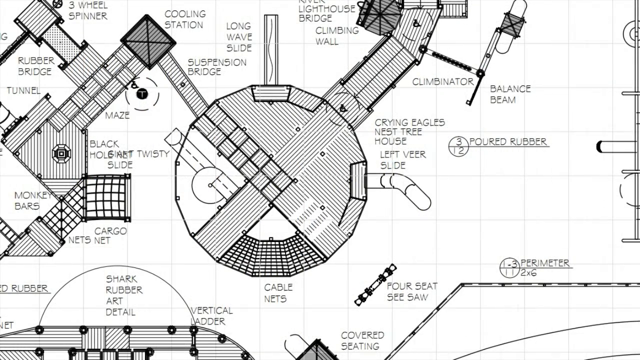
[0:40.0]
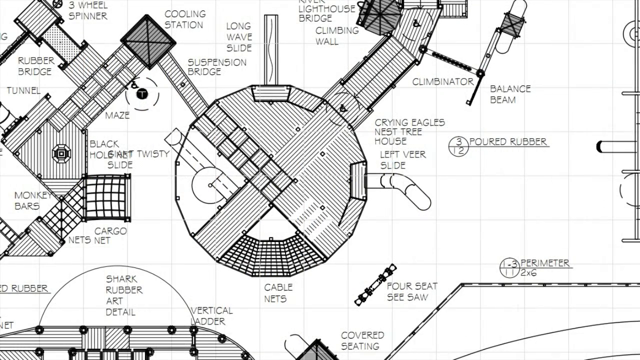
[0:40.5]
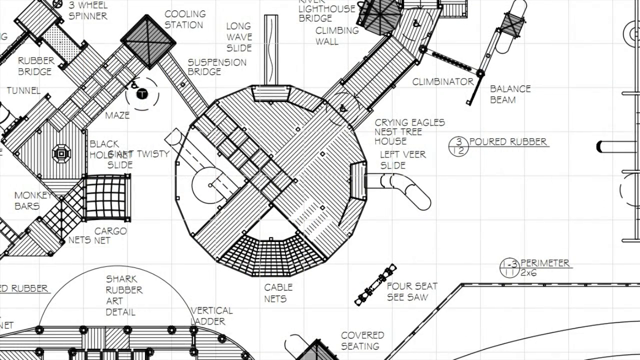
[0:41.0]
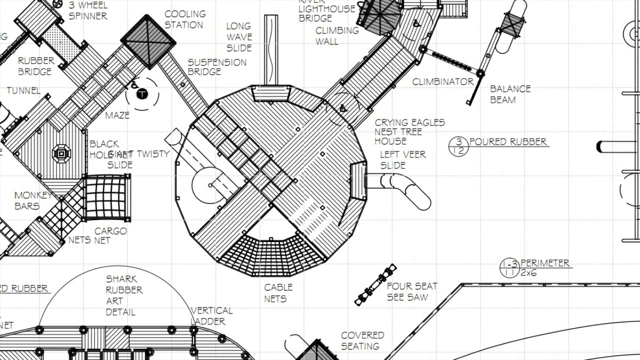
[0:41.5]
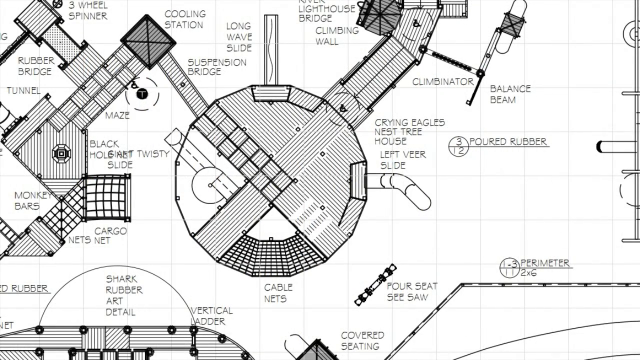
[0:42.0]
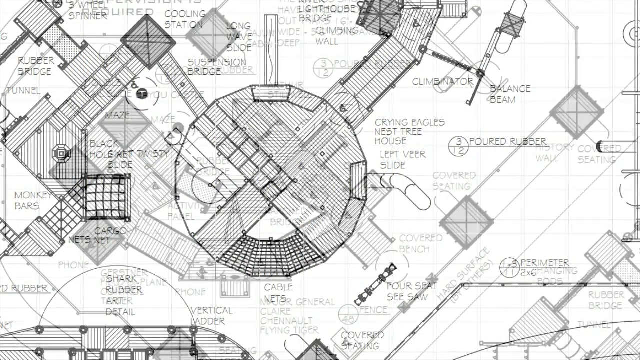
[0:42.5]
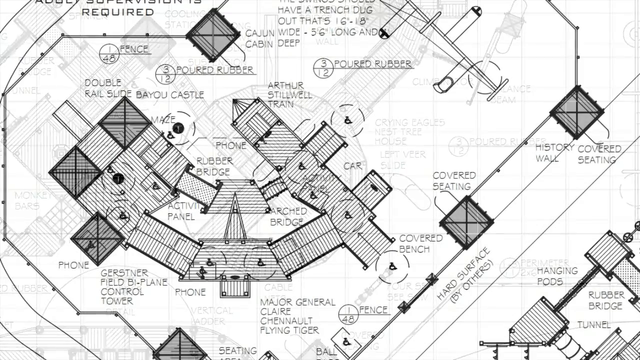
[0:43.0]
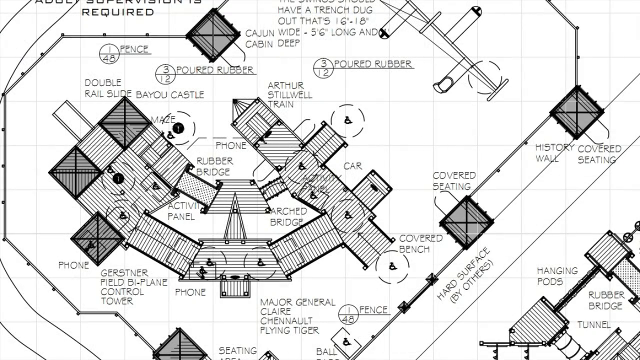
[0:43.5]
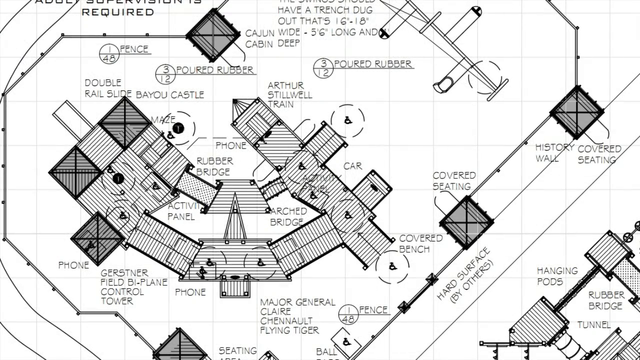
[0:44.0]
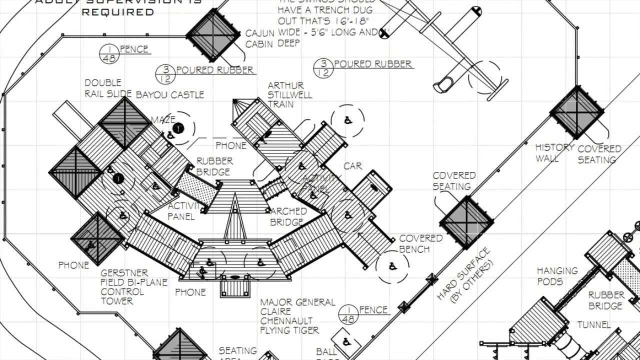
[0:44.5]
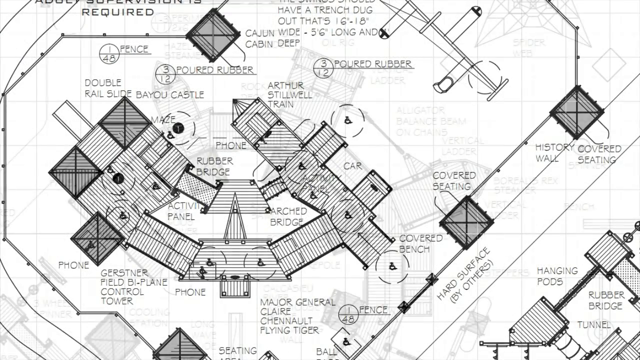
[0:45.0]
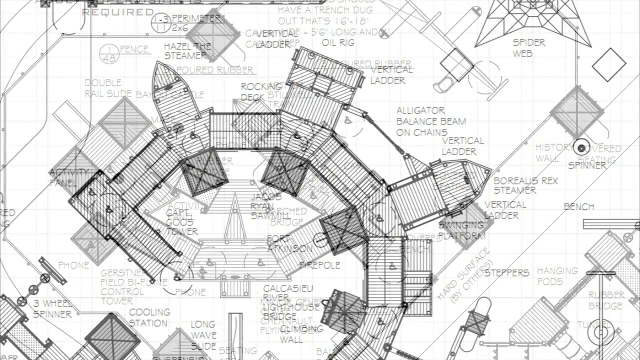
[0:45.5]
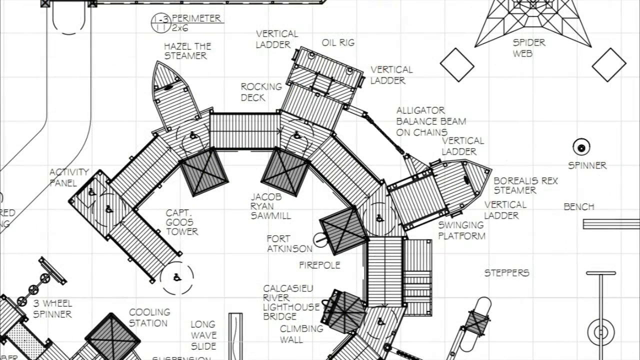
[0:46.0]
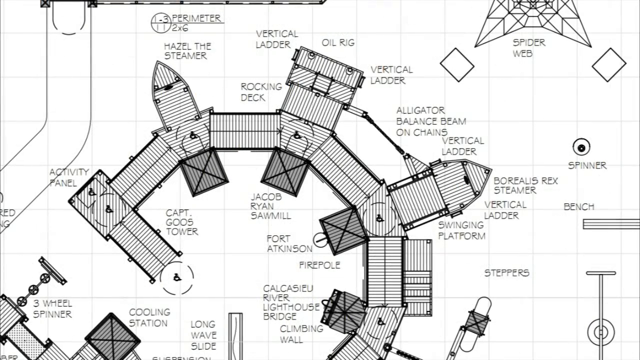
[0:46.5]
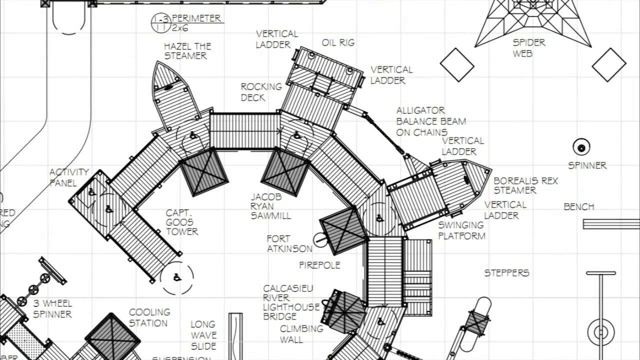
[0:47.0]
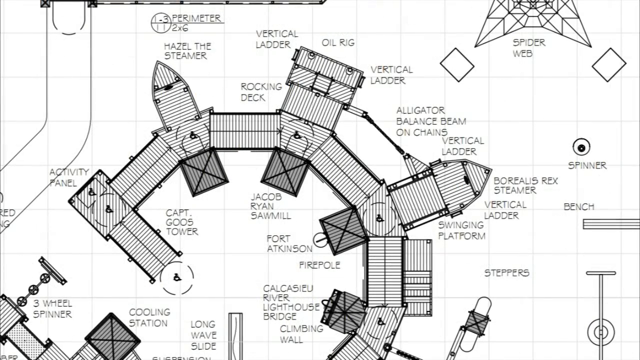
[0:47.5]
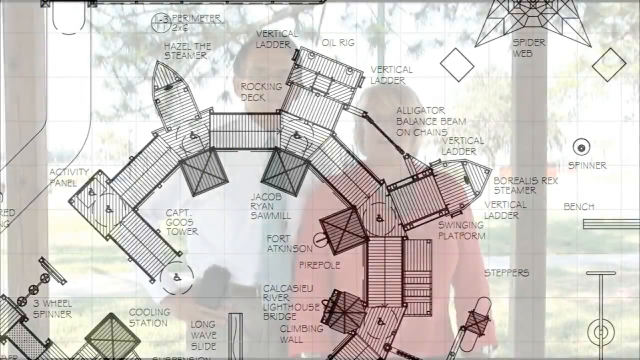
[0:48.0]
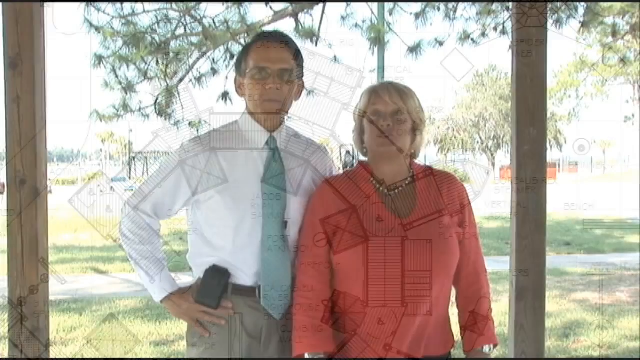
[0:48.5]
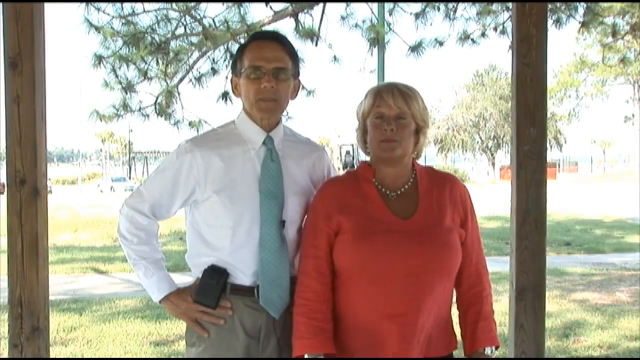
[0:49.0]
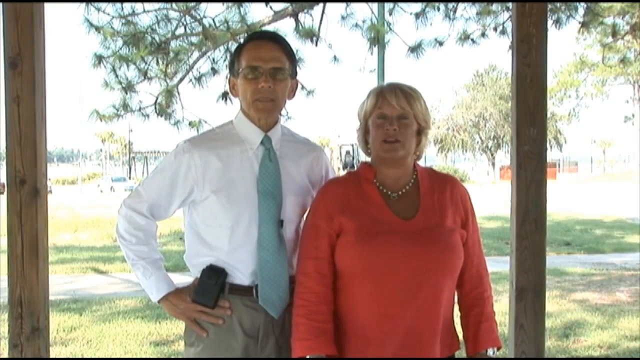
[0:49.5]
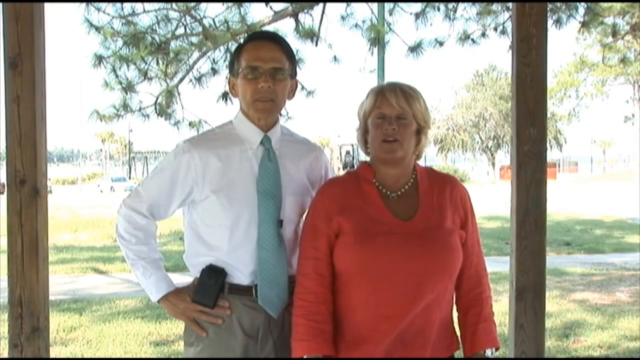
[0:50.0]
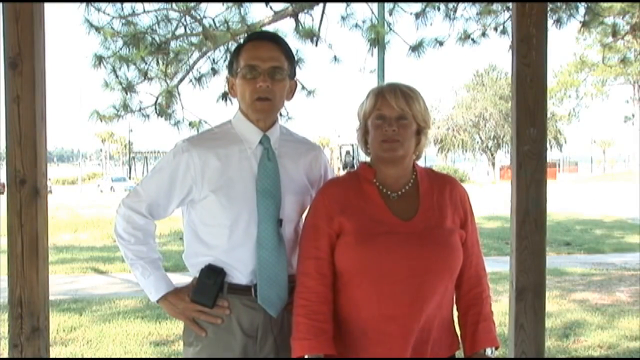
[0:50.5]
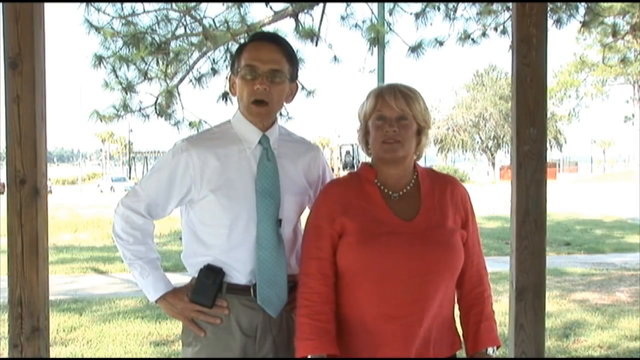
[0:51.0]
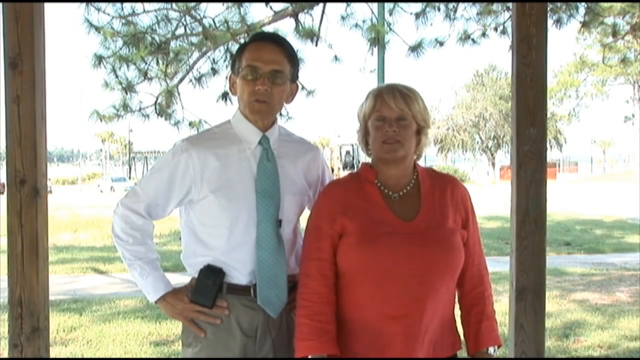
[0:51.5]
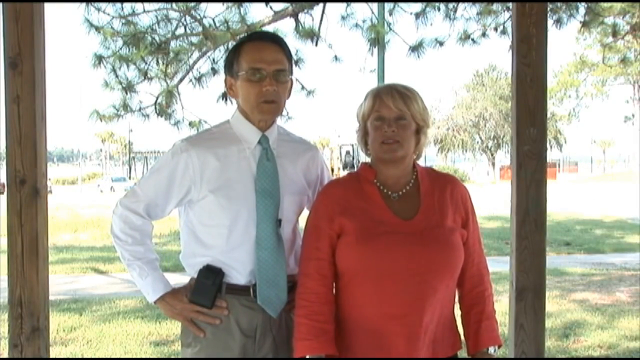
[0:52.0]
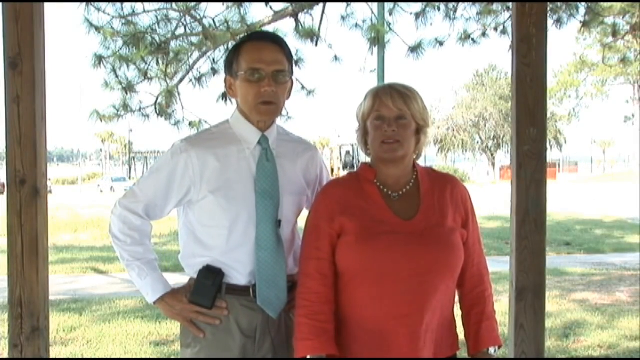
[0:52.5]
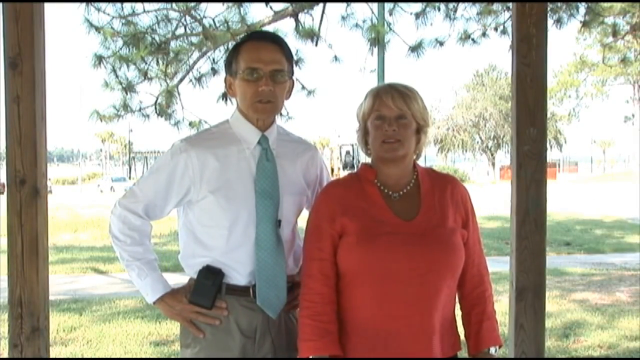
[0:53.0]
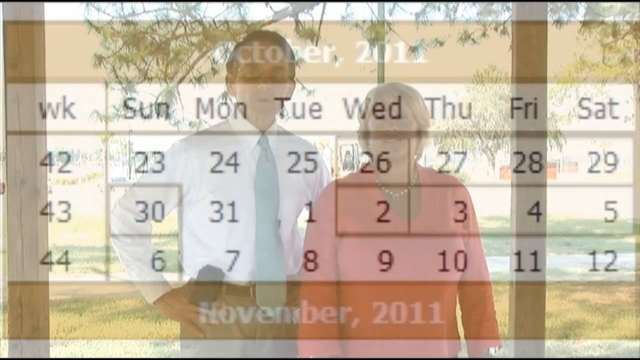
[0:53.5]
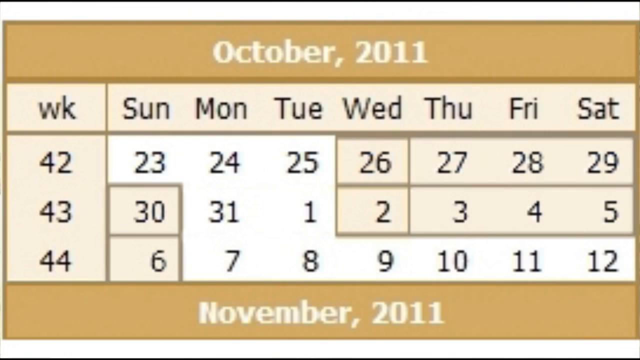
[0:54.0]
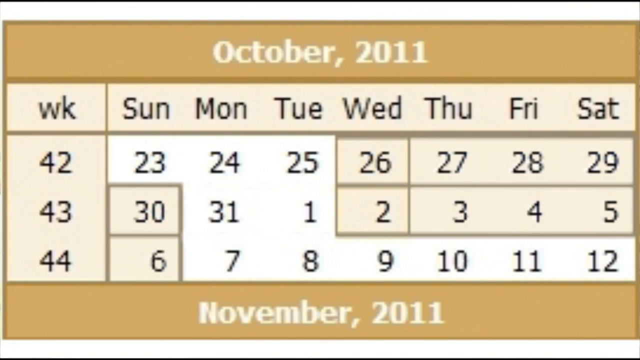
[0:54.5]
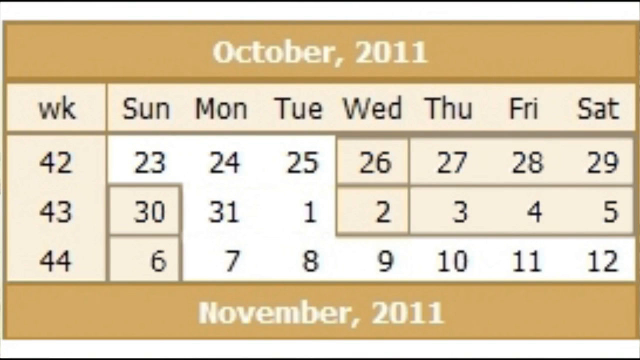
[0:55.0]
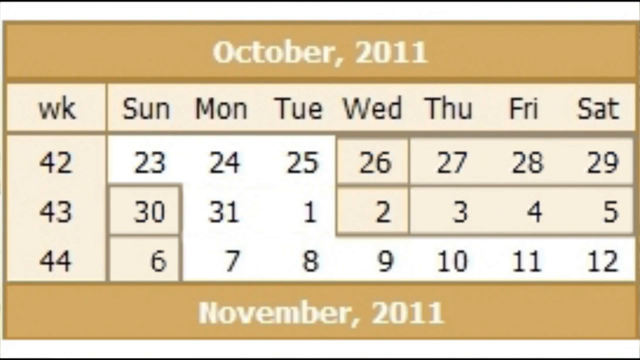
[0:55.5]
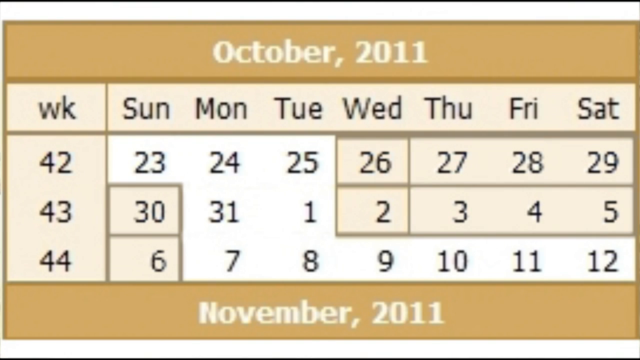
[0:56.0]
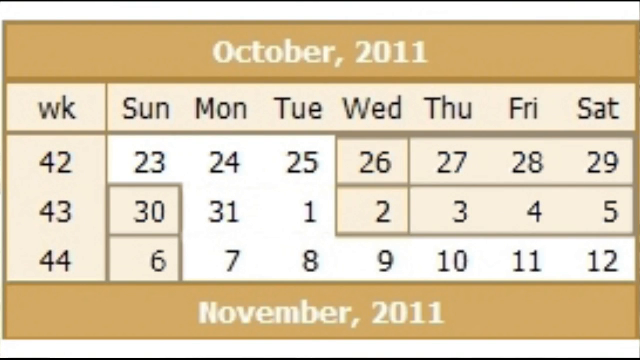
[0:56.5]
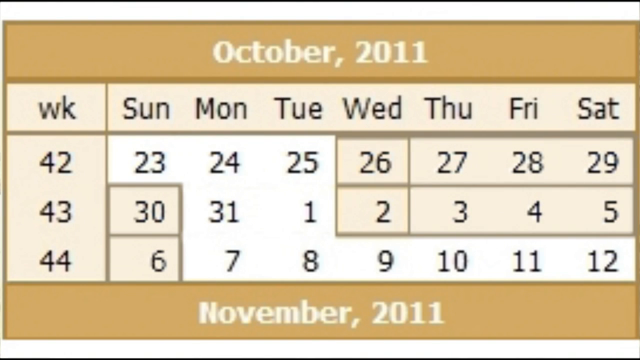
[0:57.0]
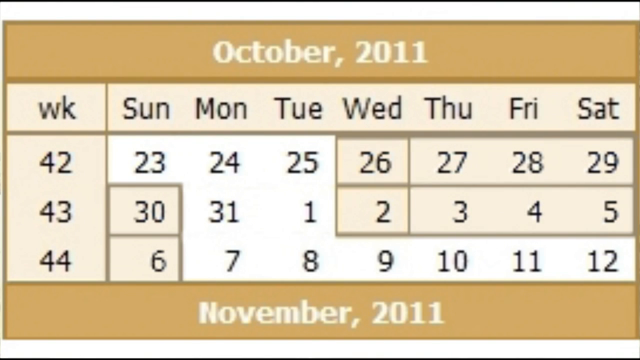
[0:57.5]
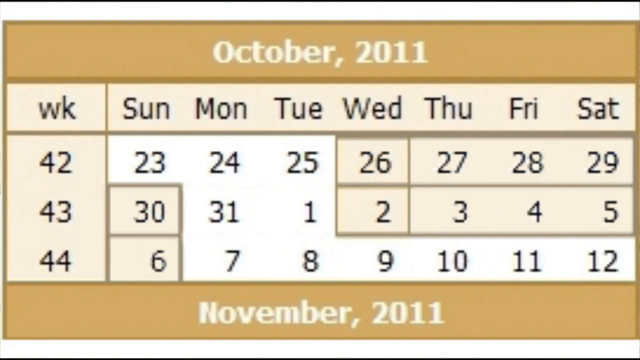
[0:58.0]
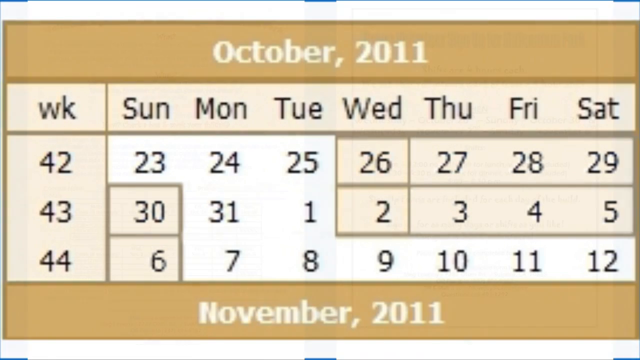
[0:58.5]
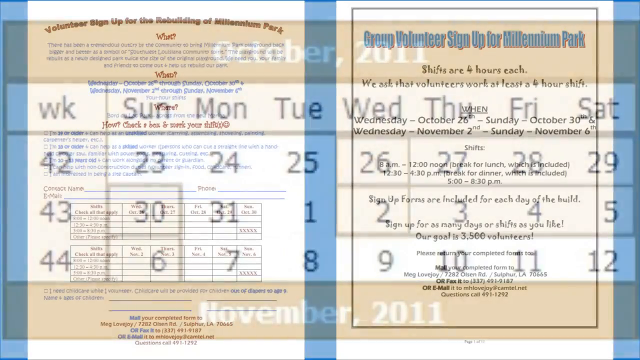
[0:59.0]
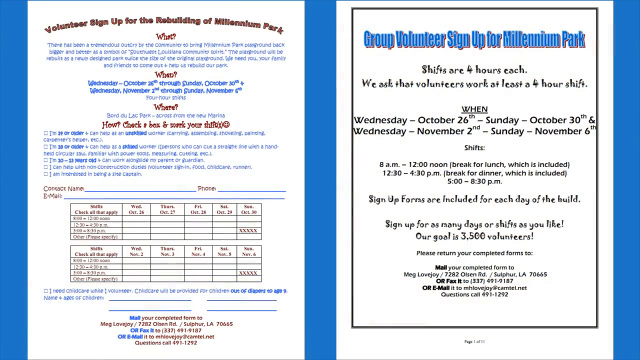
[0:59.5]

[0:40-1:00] A close-up structural view of the park's play structure appears, with each part labeled, including "nest", "treehouse", "house bridge", "long wave slide", "suspension bridge", "rocker bridge", "tunnel", "monkey bars" and "net". Next comes a calendar showing dates, followed by diagrams of the park and its structure.